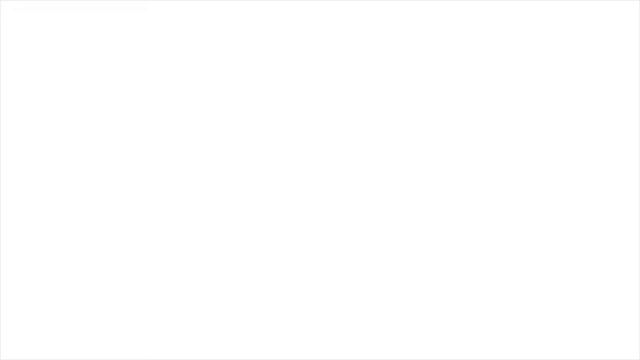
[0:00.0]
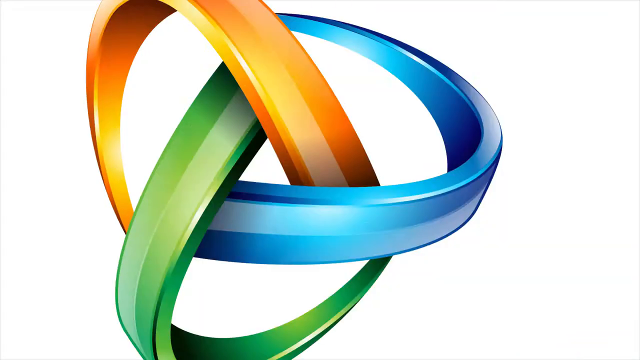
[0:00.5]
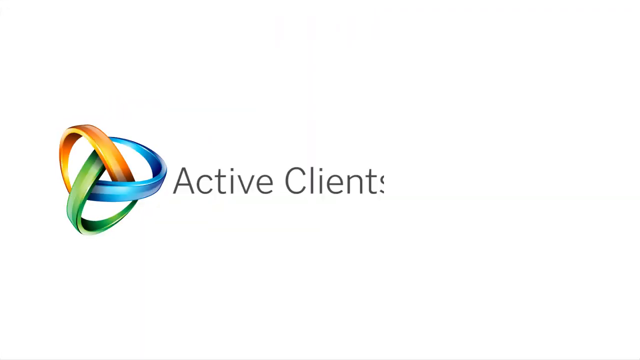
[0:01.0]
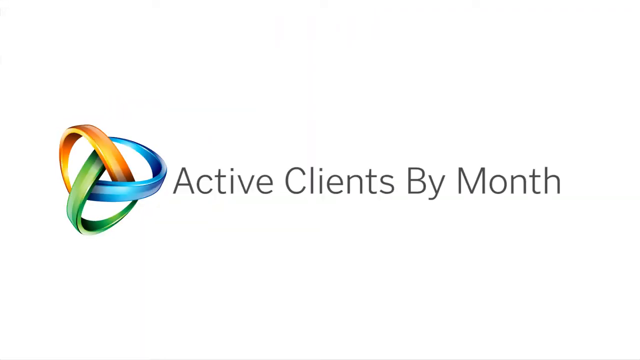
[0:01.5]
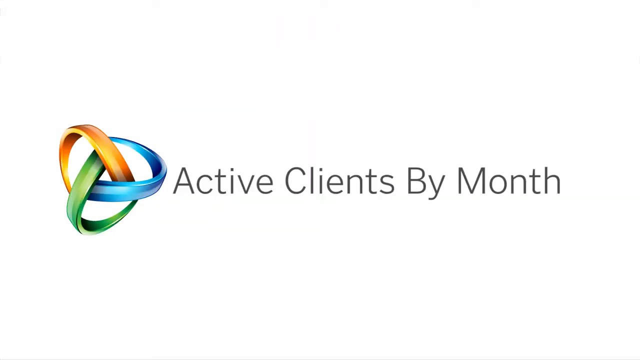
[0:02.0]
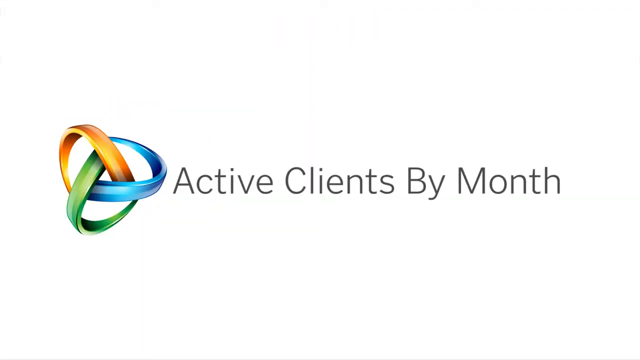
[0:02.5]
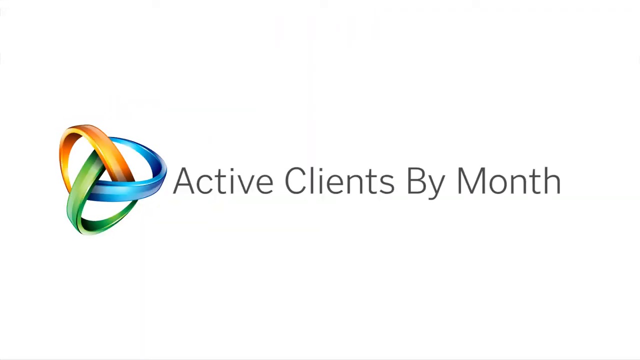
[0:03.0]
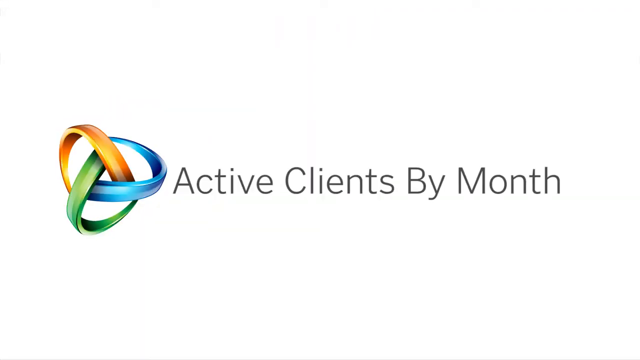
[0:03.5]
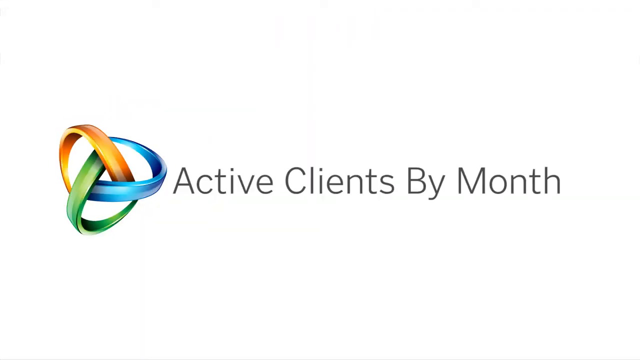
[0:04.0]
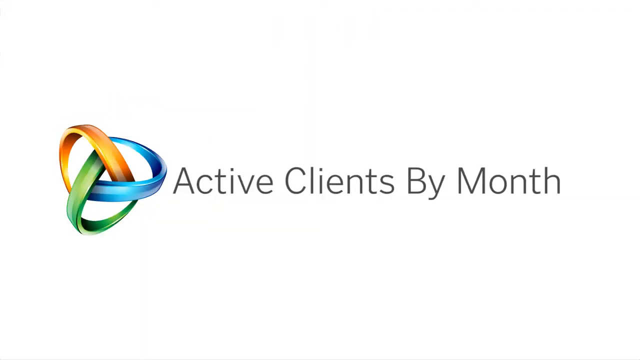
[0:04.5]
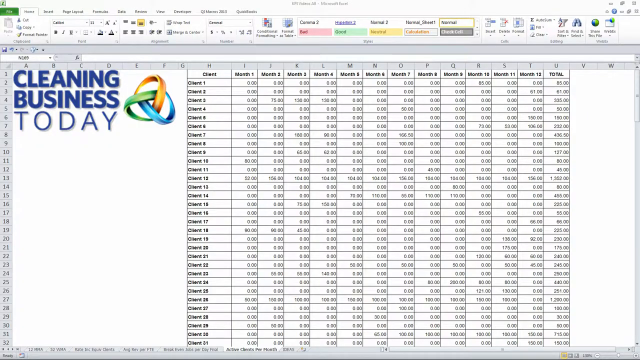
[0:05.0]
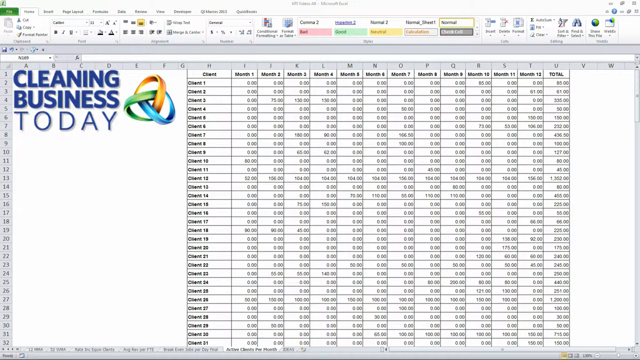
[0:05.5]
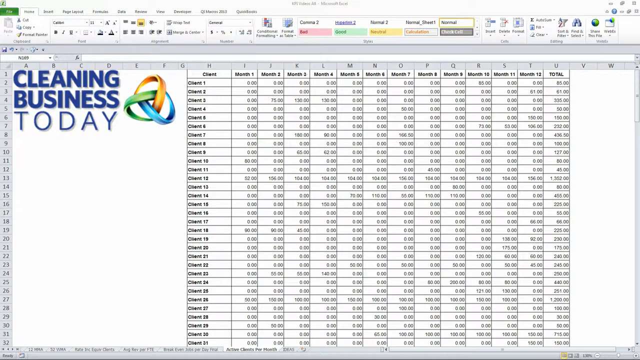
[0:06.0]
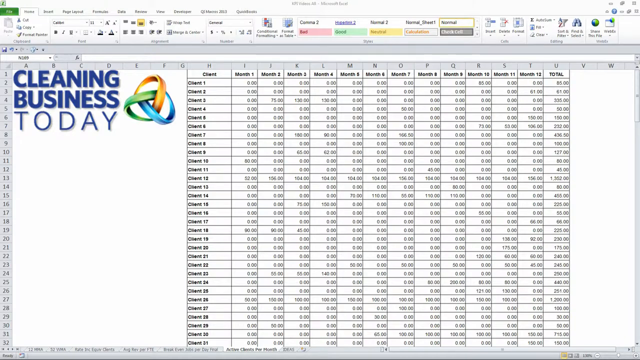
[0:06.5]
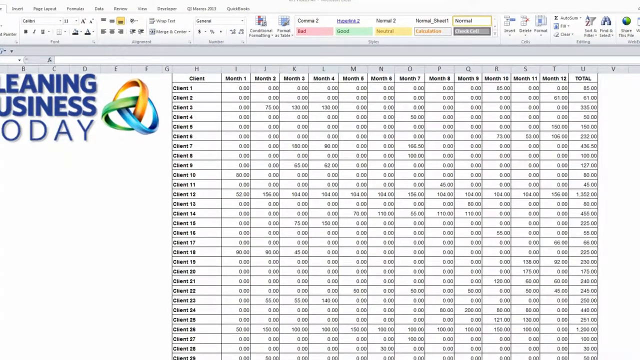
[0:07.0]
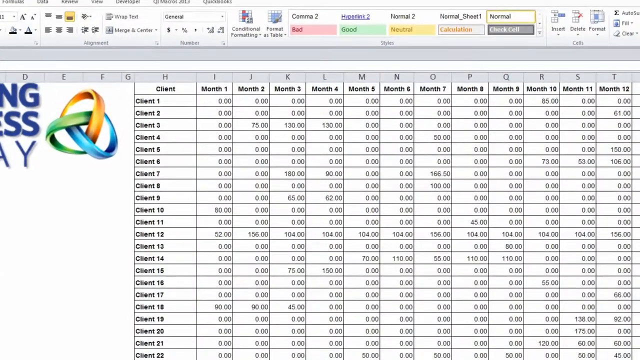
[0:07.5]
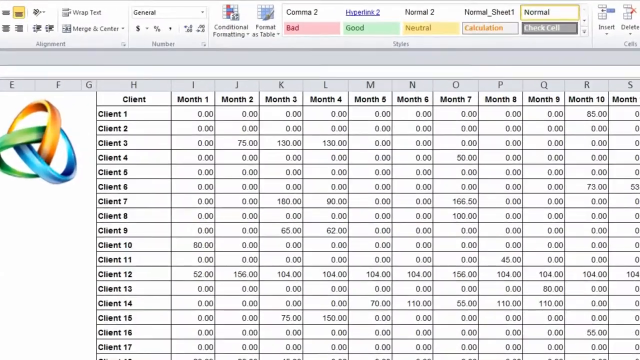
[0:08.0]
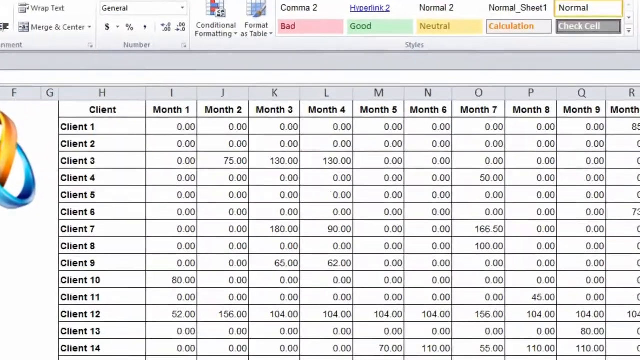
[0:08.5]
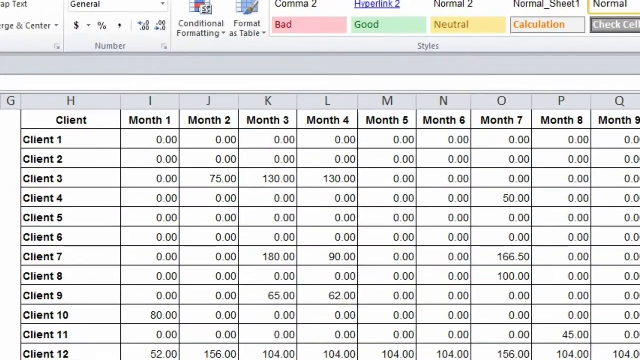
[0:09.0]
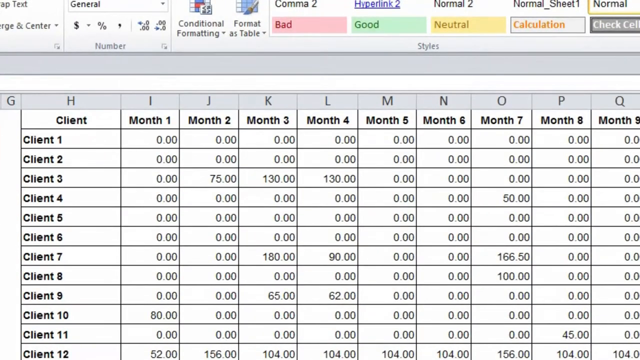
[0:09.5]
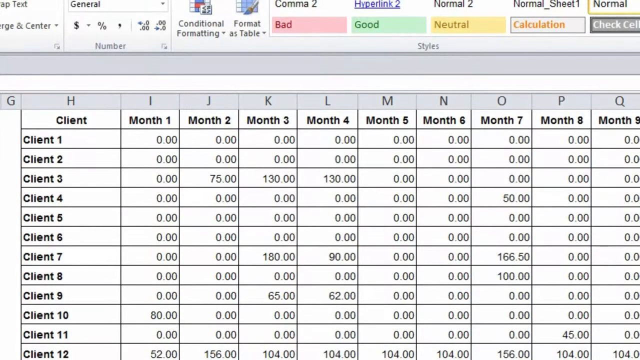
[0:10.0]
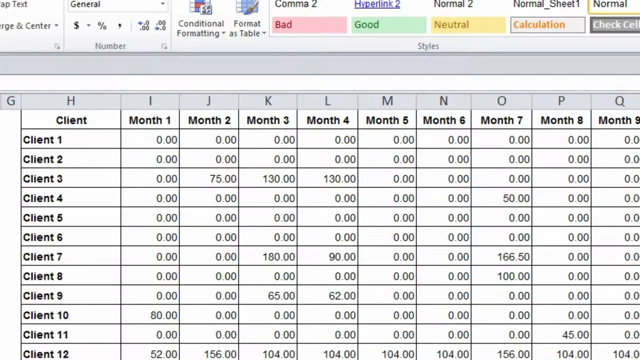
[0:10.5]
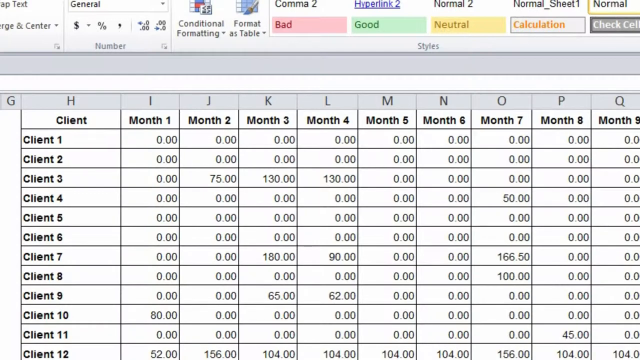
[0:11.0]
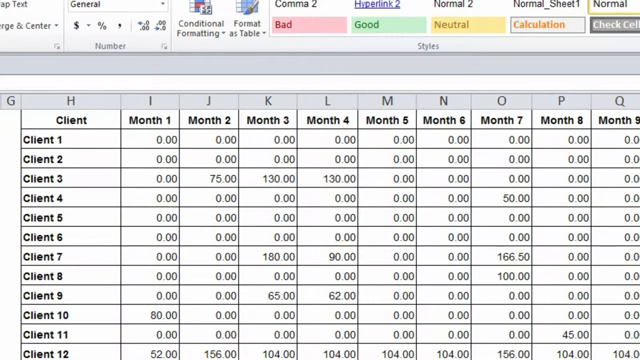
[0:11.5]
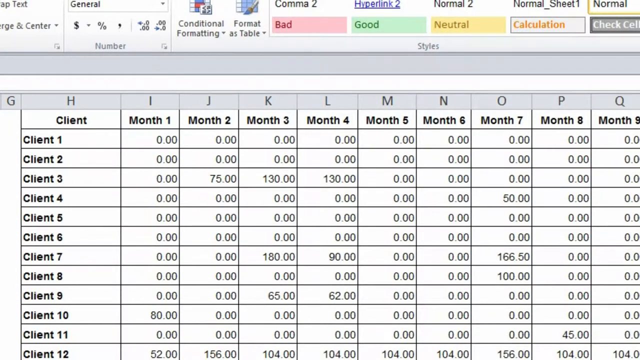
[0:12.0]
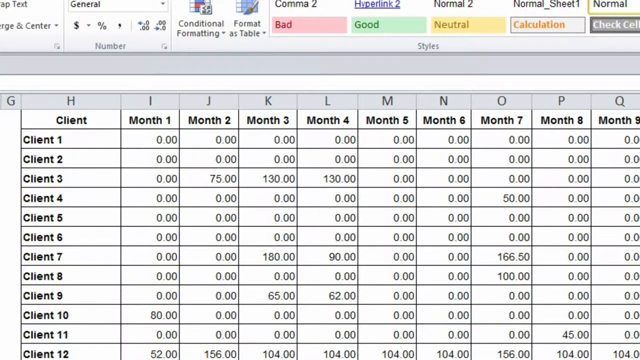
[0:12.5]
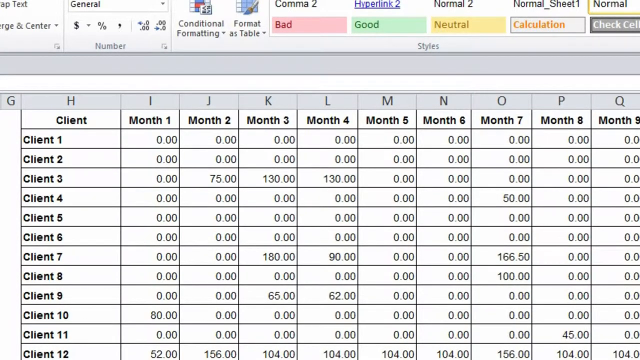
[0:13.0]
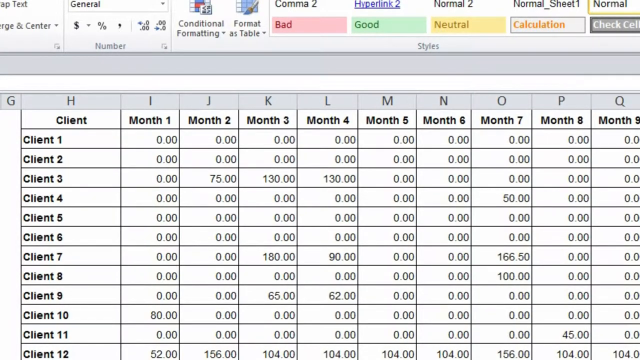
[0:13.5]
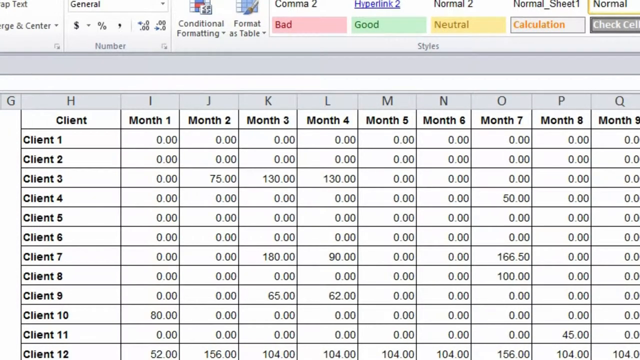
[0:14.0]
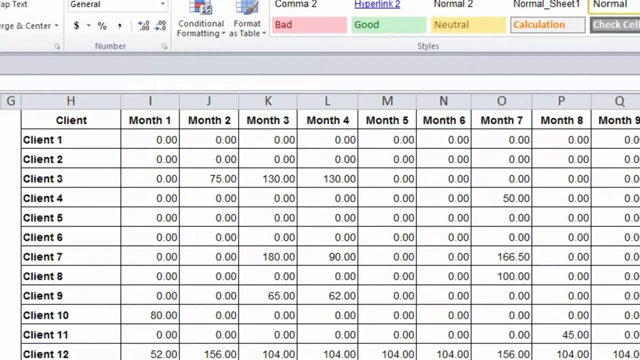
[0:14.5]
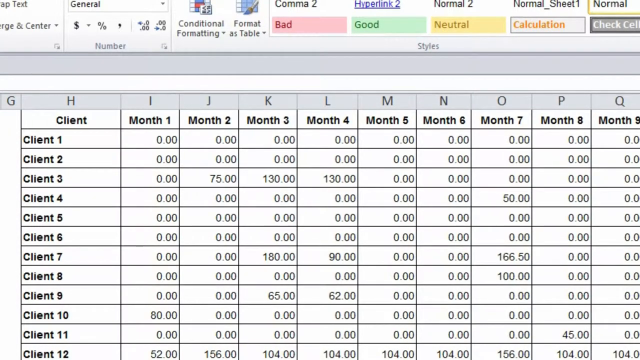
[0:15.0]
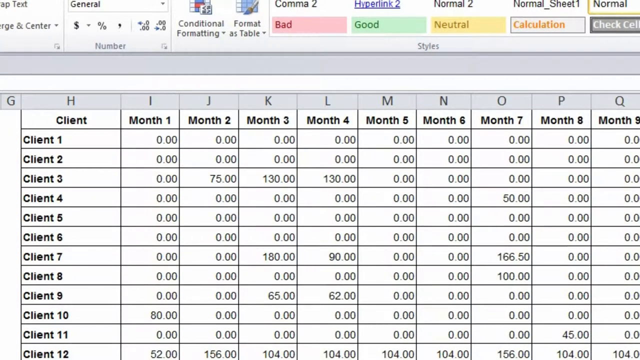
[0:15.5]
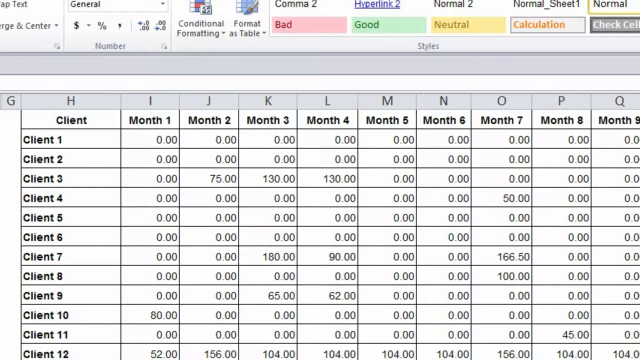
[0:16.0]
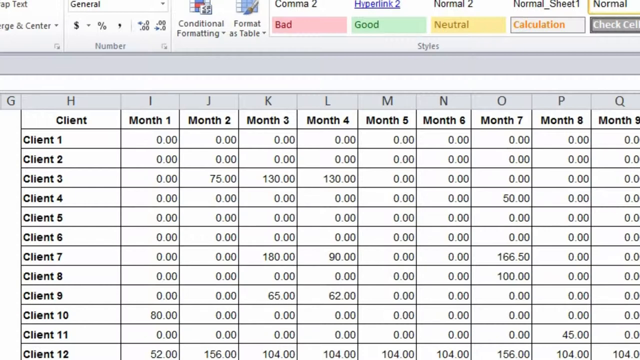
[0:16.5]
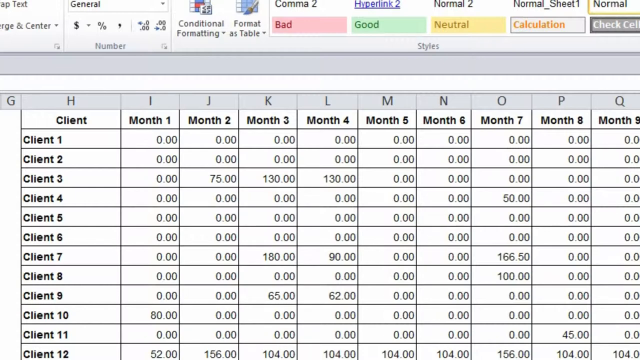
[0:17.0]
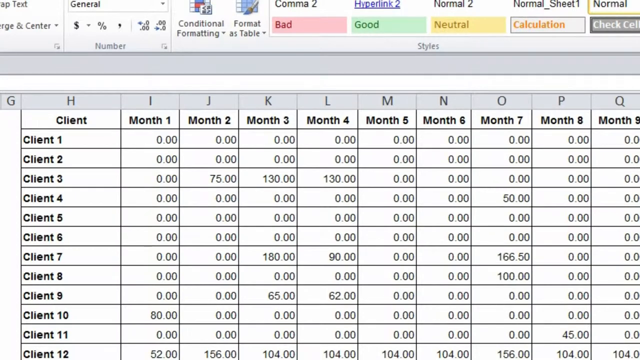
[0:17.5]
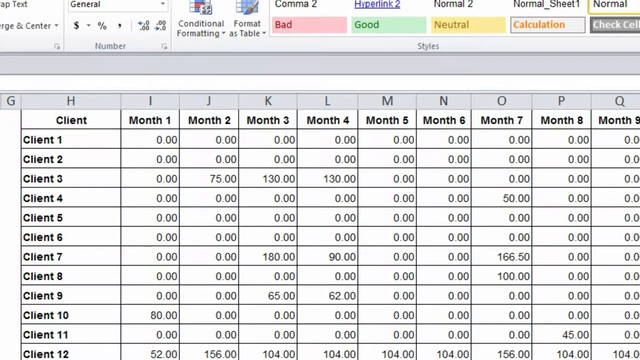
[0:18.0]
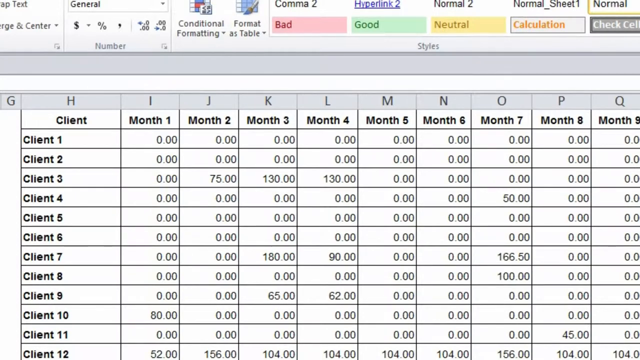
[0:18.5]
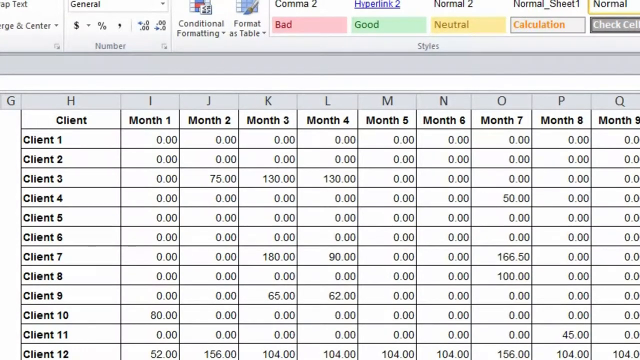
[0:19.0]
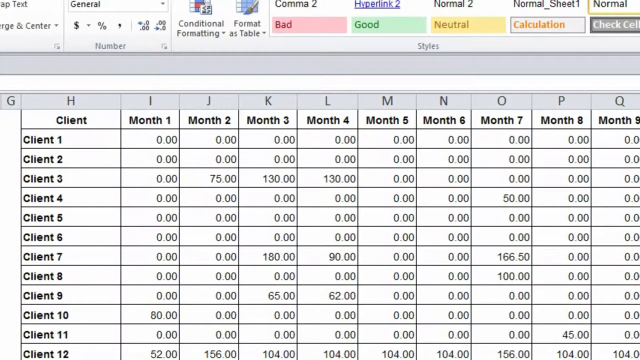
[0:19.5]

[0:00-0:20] A spreadsheet titled "active clients by month" appears, with the text "cleaning business today." The clients are listed as client one, client two, and so on, and it seems to be a demonstration rather than a real business. Columns run from month one, month two, month three all the way to 12 months, followed by a total column. Client one apparently started in month 10, with a total of $85 for the year, and only a couple of clients, such as client 10, client 12, client 18 and client 26, seem to have been billed all year. It looks like an ordinary Word-style spreadsheet rather than Google Sheets, and at the top there is a kind of color-coded section reading "bad," "good" and "neutral."